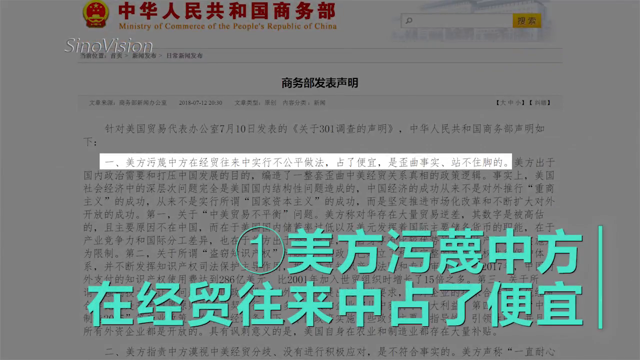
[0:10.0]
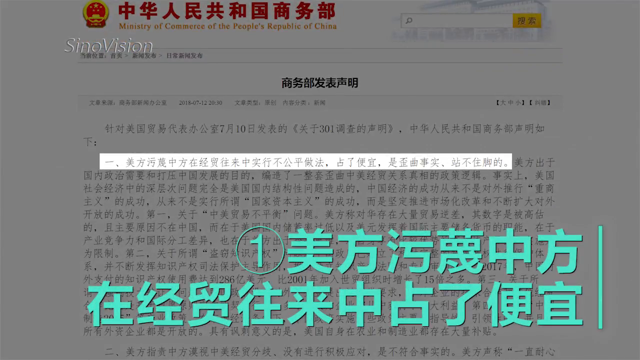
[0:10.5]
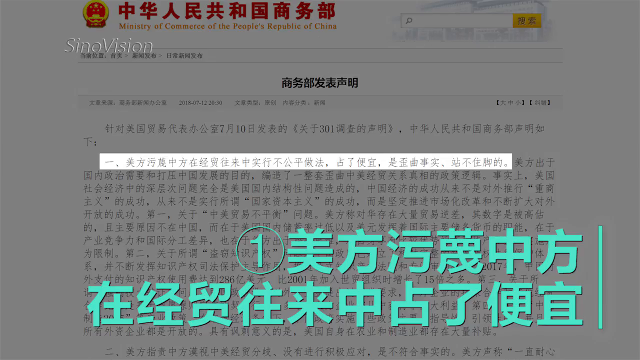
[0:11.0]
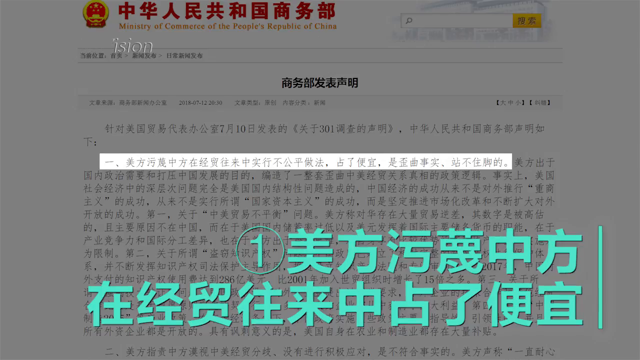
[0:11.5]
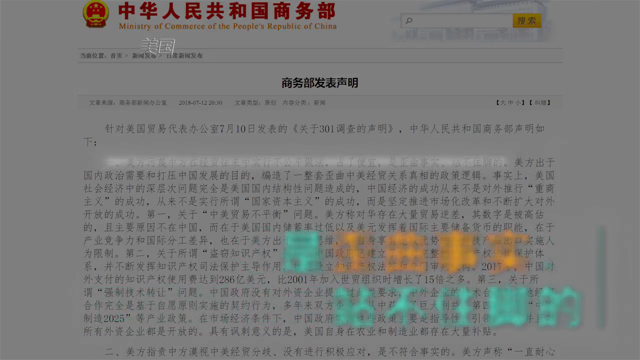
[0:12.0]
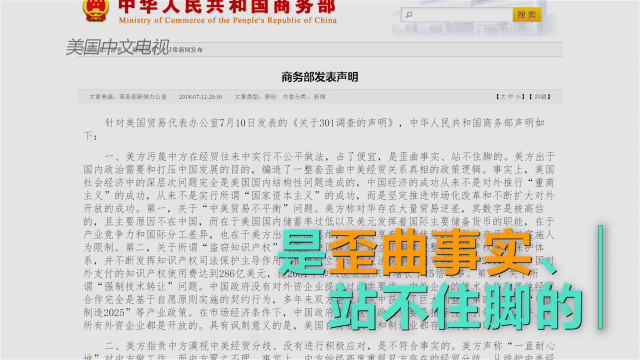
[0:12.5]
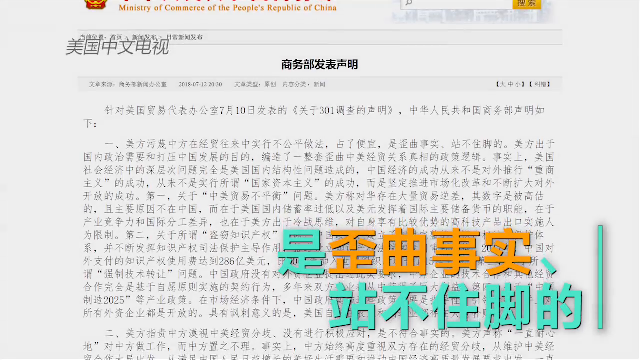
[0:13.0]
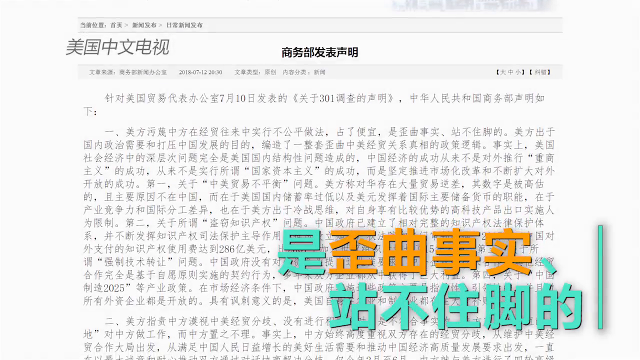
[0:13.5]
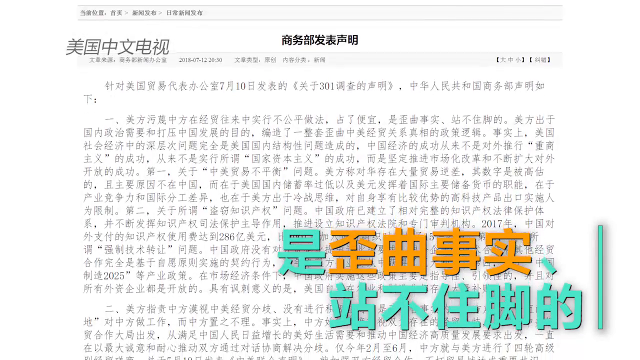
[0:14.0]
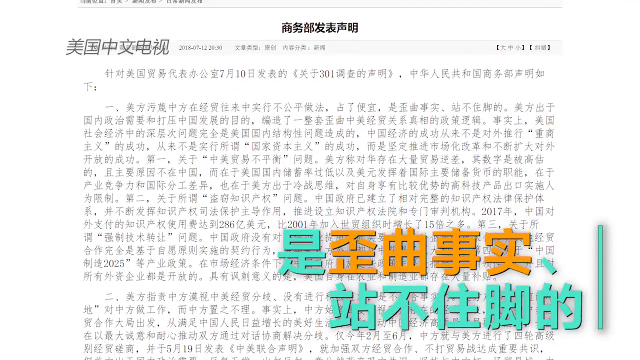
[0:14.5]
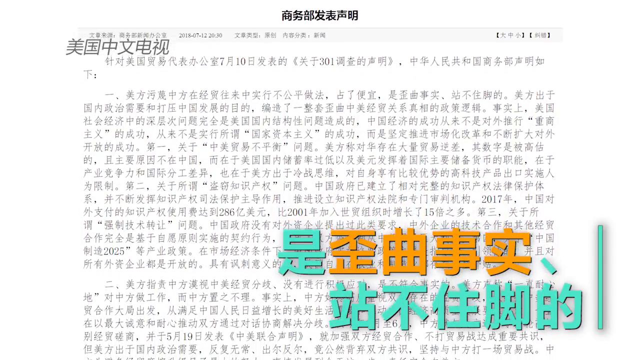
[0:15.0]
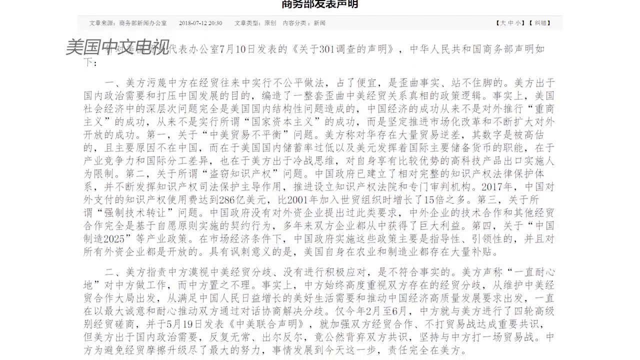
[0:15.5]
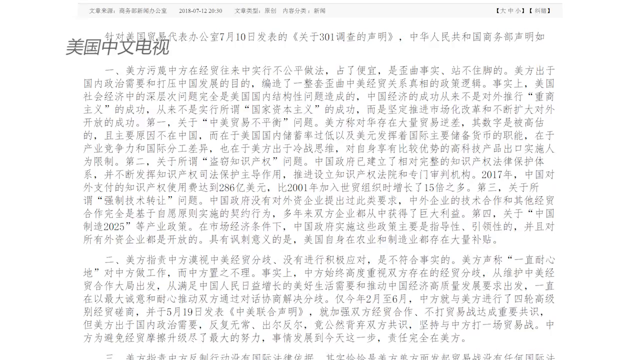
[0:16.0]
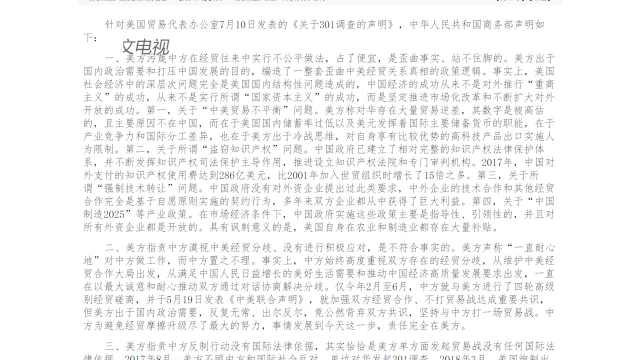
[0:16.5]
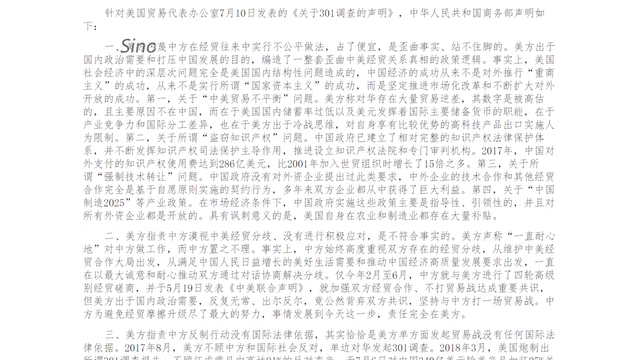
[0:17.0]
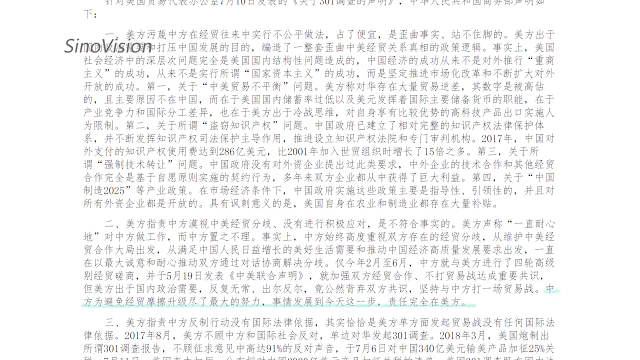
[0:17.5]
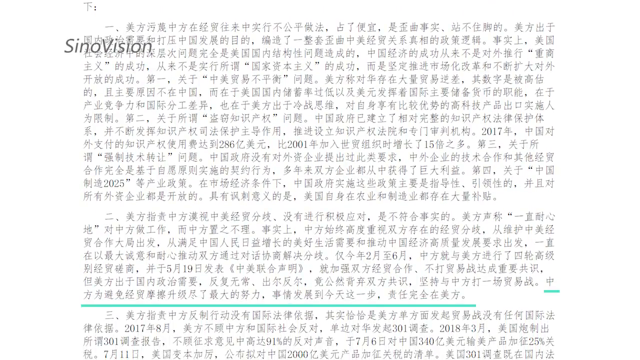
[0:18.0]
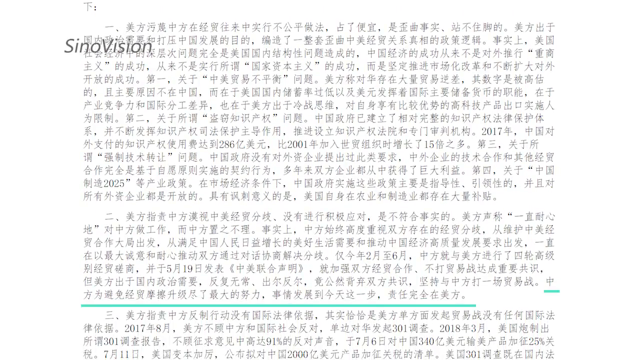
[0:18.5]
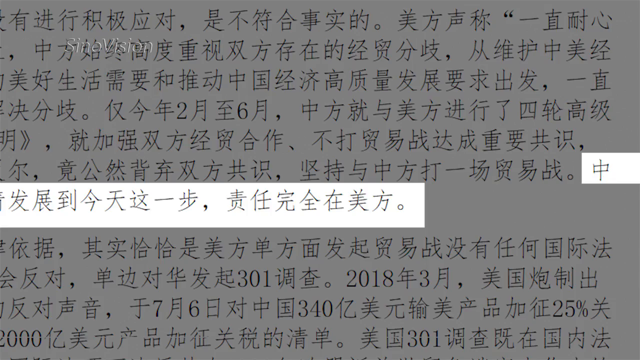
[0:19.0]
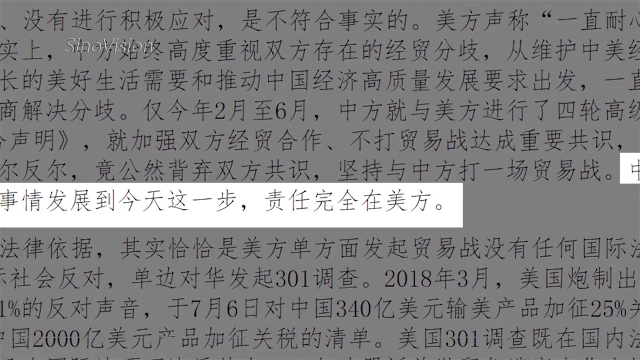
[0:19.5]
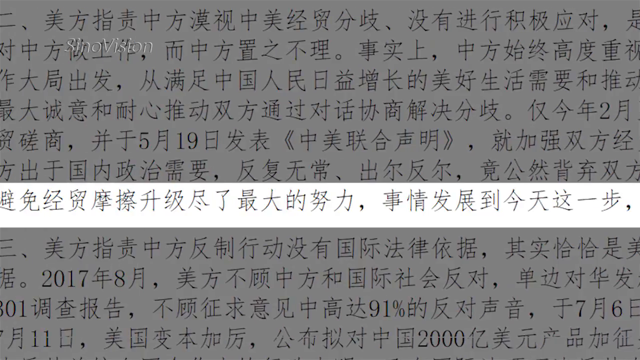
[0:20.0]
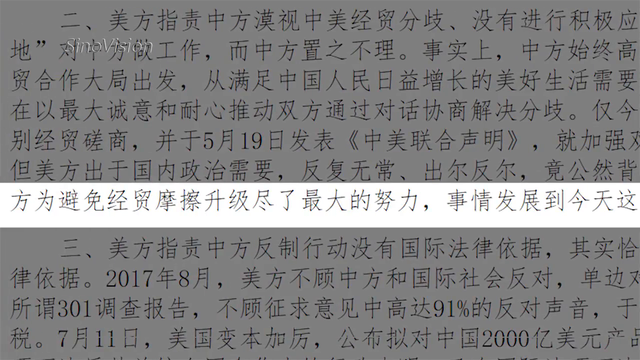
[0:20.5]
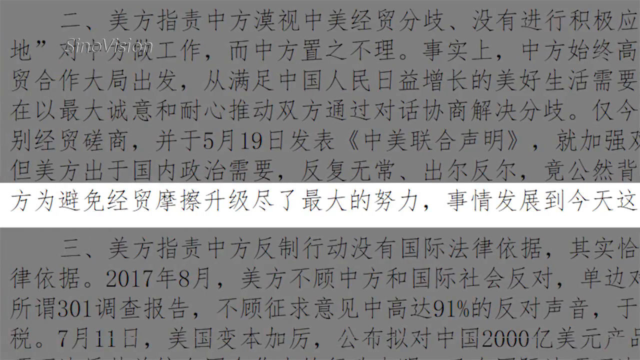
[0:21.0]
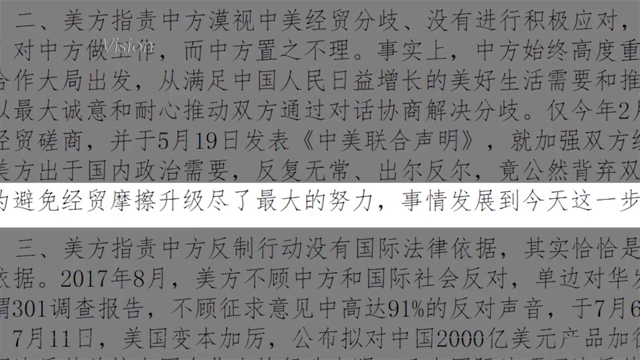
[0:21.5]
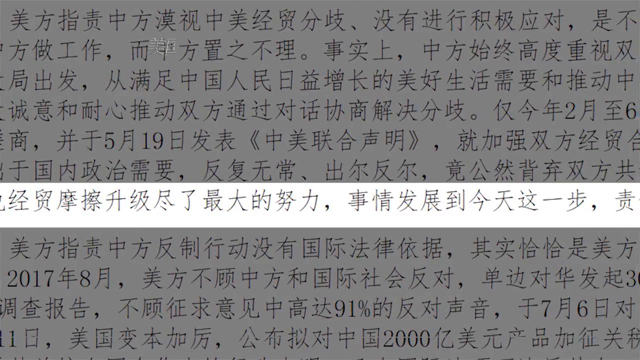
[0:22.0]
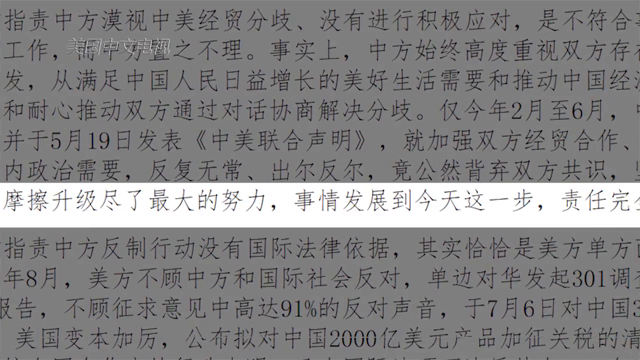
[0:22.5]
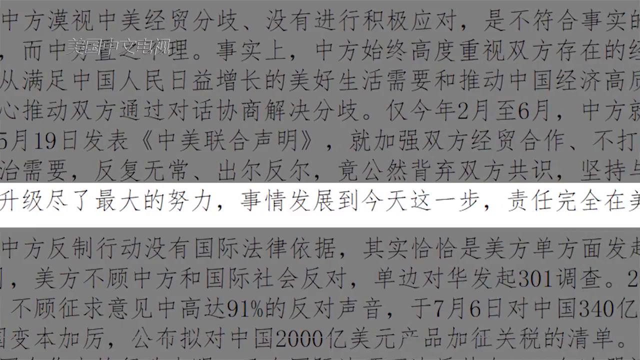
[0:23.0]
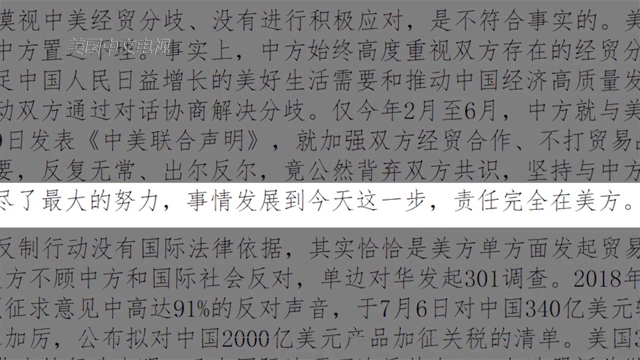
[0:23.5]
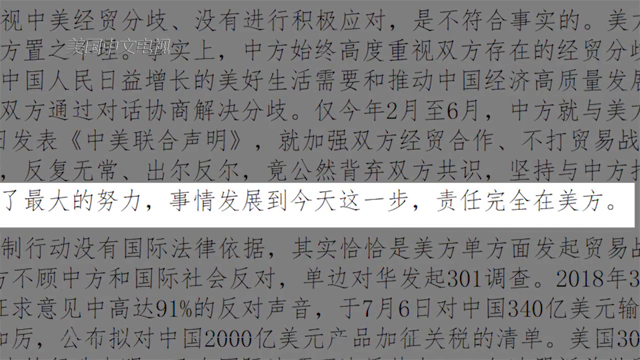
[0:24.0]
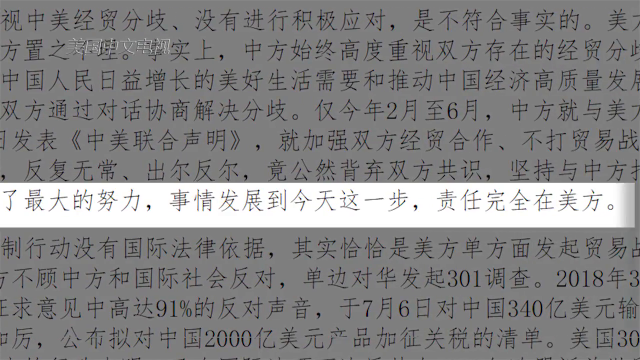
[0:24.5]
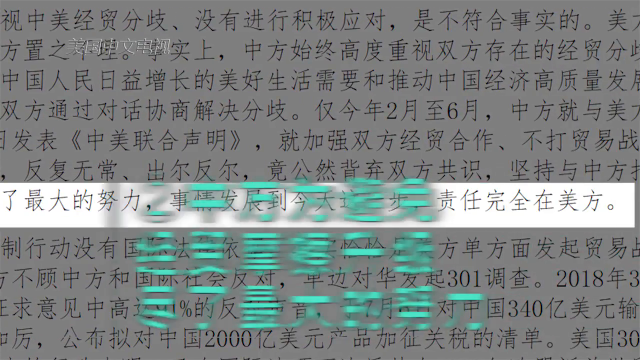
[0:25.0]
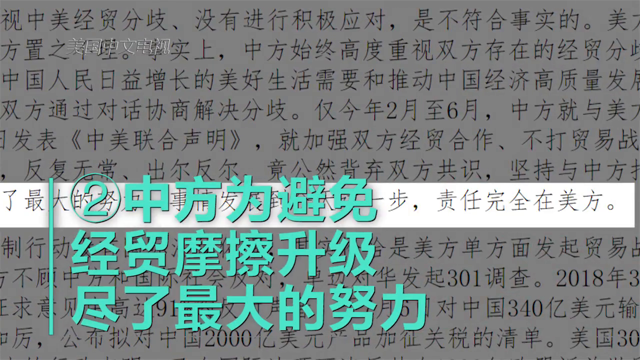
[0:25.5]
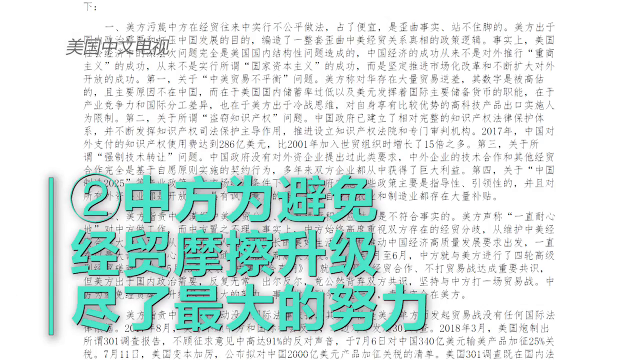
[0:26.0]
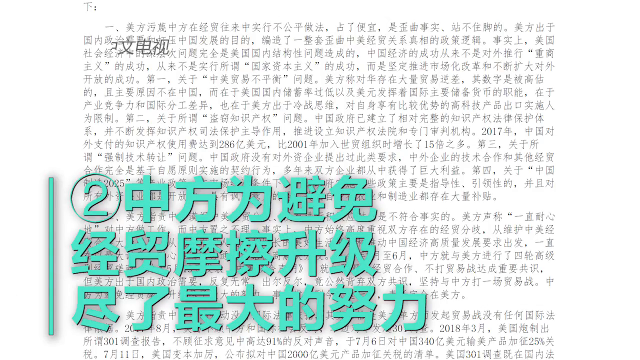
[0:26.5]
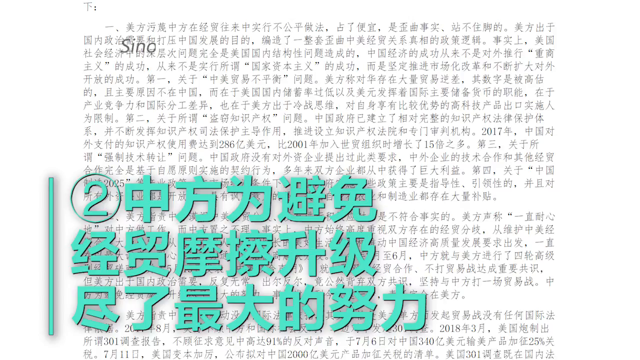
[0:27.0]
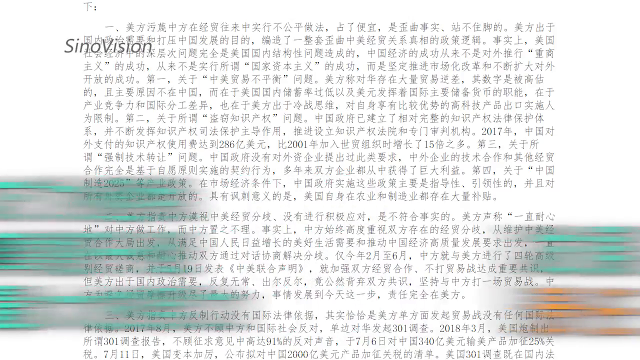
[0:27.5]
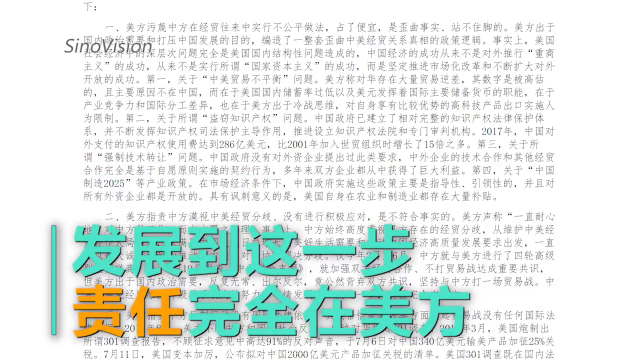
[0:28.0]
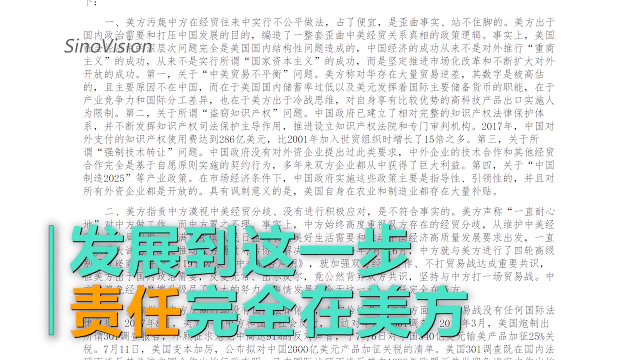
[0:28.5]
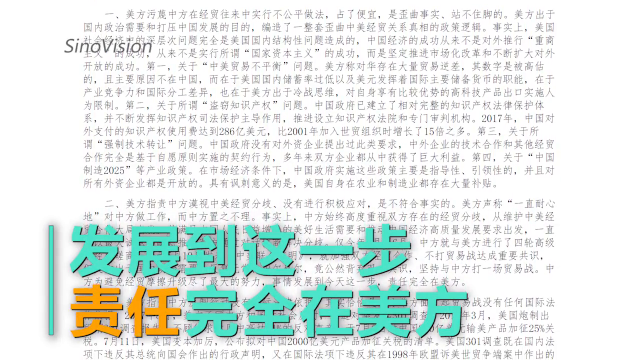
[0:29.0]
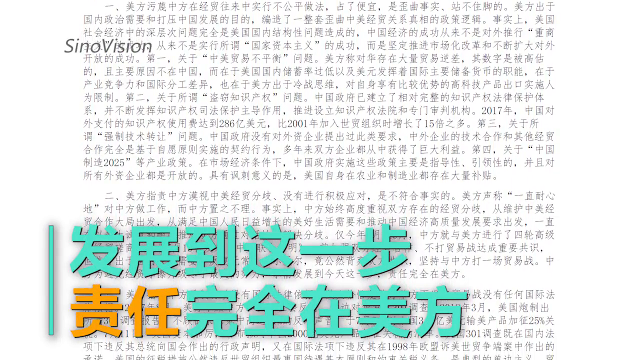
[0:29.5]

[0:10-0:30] A page full of Asian print, probably Chinese, is shown mostly in black on a white background, with some teal and orange. Certain areas are highlighted, and the text "CINOVISION" appears. A highlighted area includes the number one in a circle along with Chinese words. Further down, the text looks like a paragraph apart from the highlighted areas that draw attention to other parts of the section. At the top some of the font is red and reads "Ministry of Commerce of the People's Republic of China," part of the title in the upper area. There is bolded font at the very top, and on the right side there is an area where something can be typed into a search engine.